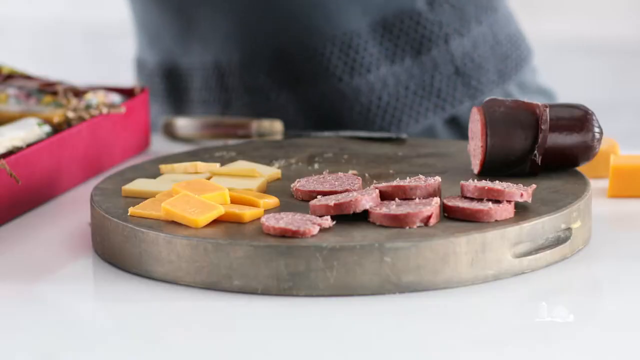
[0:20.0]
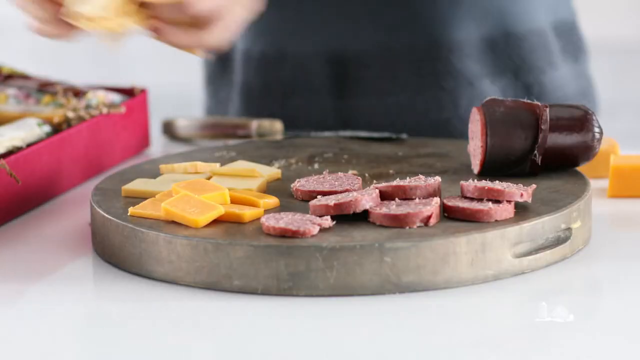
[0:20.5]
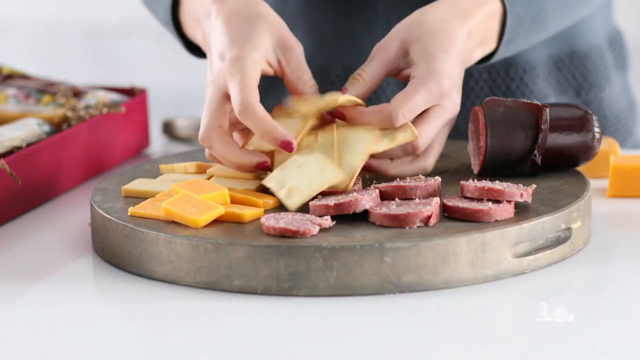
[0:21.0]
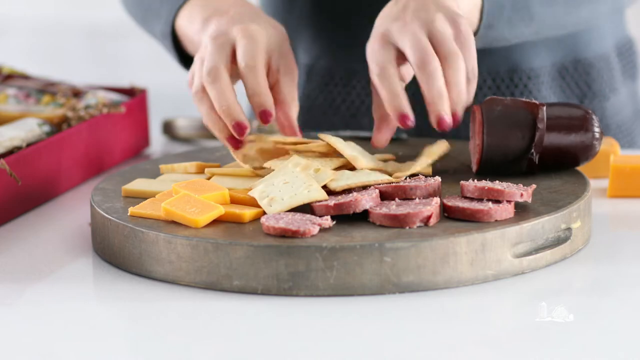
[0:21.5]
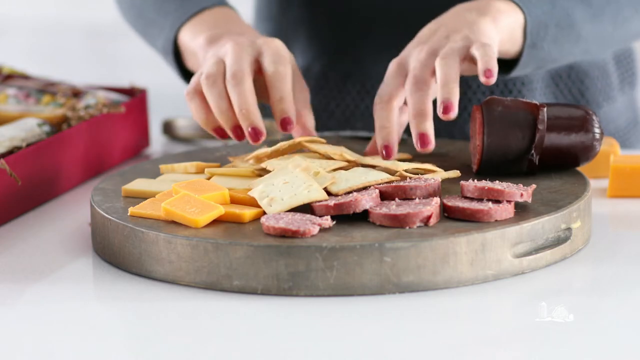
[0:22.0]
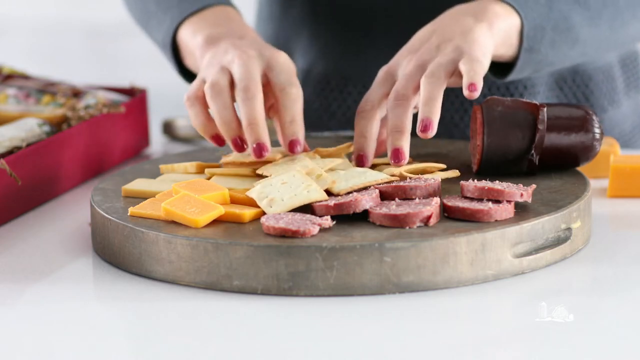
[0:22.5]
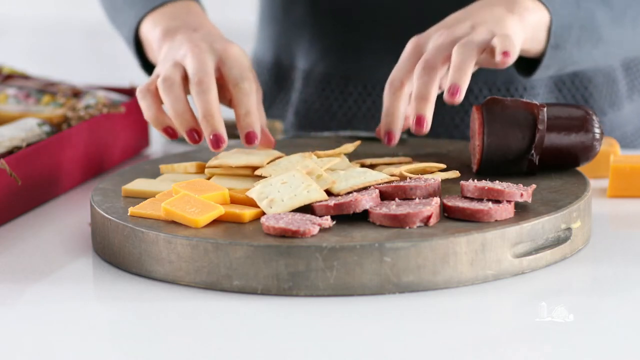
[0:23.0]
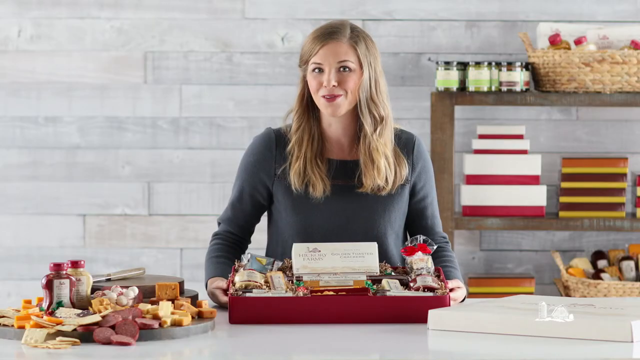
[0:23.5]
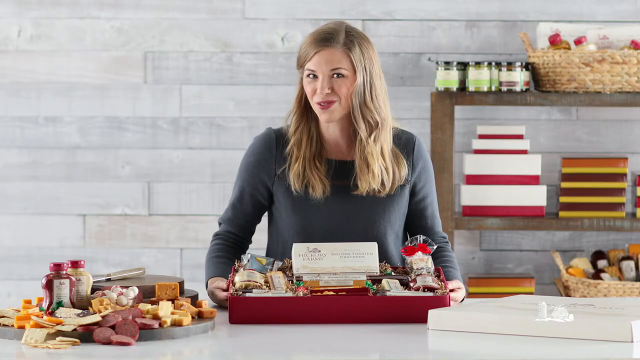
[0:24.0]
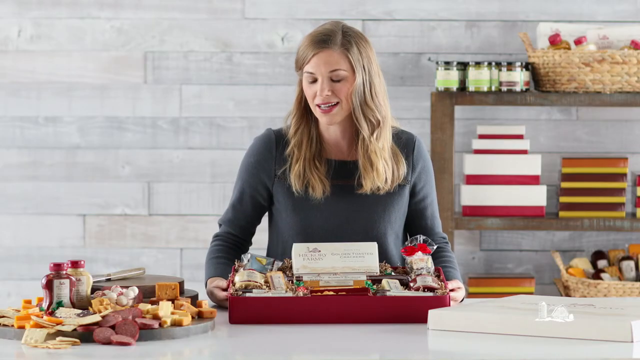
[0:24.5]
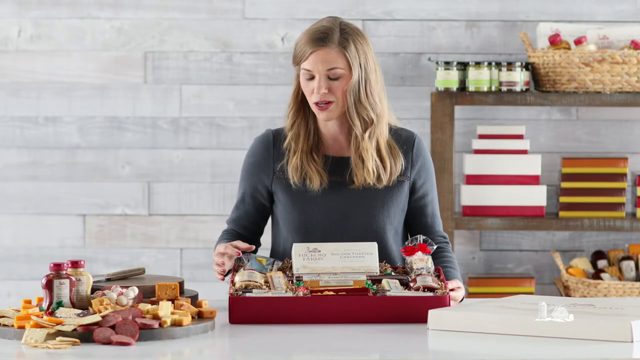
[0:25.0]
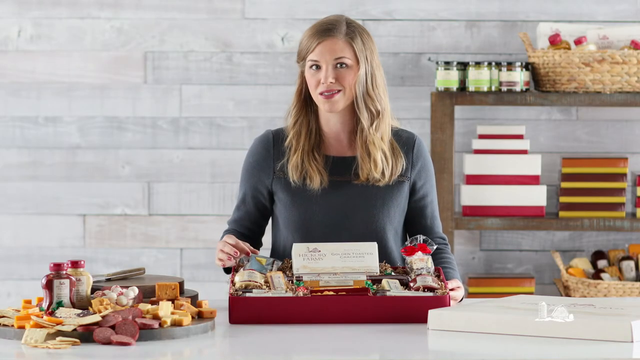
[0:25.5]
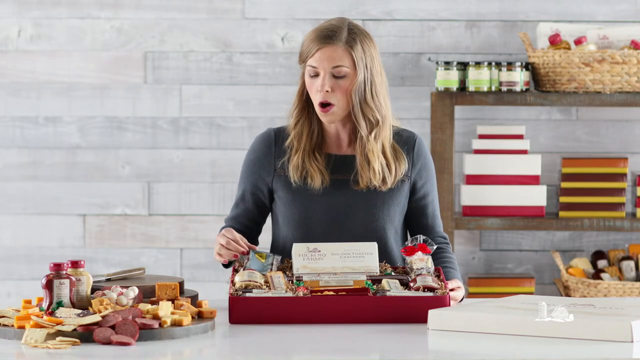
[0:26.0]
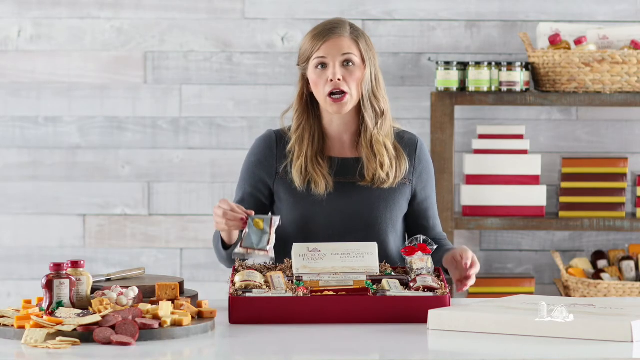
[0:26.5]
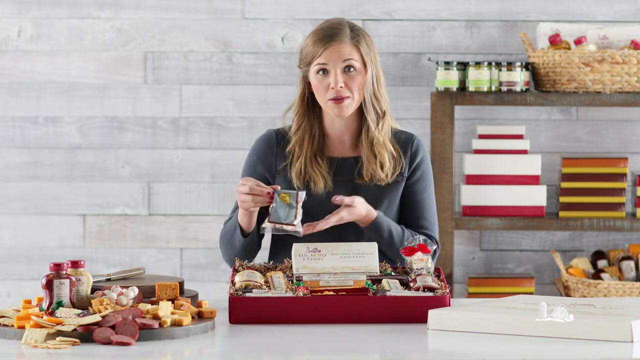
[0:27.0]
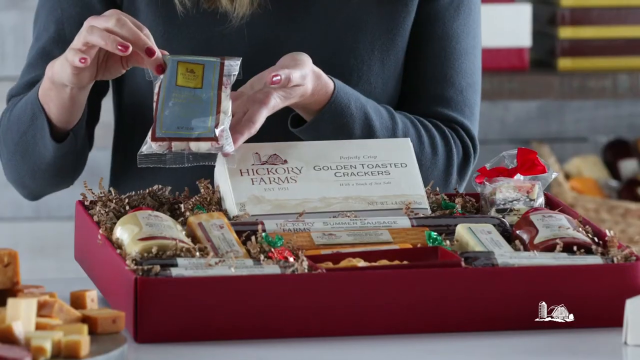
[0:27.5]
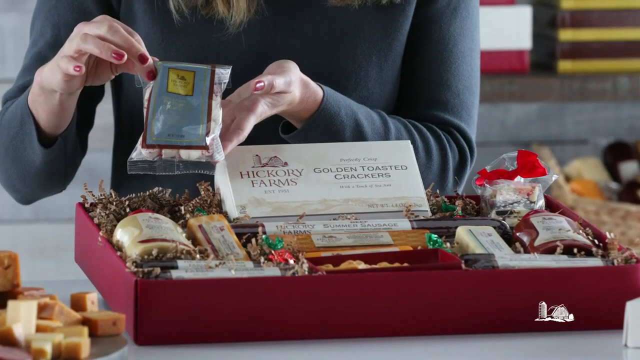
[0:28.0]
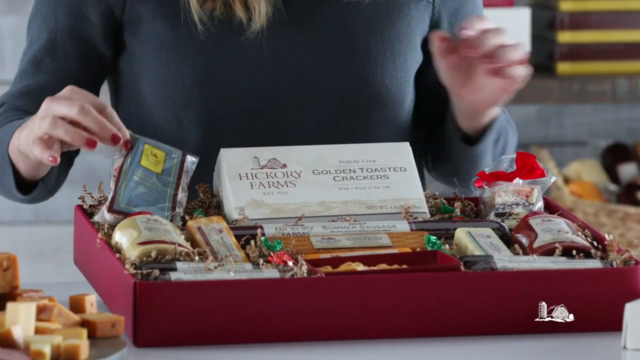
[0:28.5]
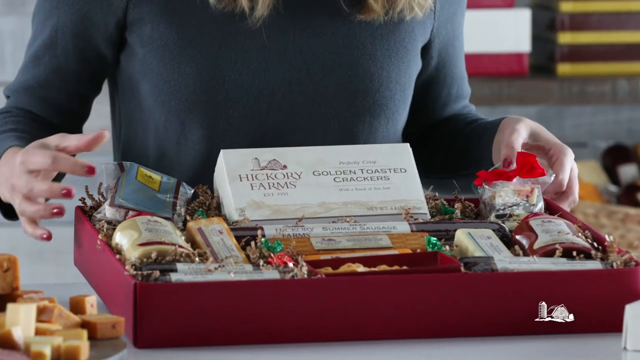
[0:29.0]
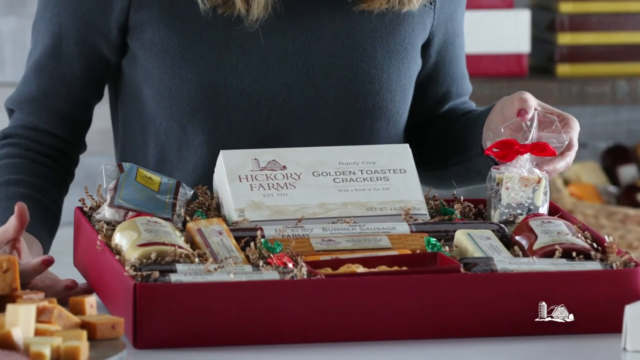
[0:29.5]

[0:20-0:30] Sliced sausages are visible, along with other products the woman has brought together, including biscuits and other items combined for the gift bowl or gift basket. She shows the presents she has in there. She is in the kitchen with a chopping board holding slices of sausage, and she puts in some mixes and some spices for the gift box.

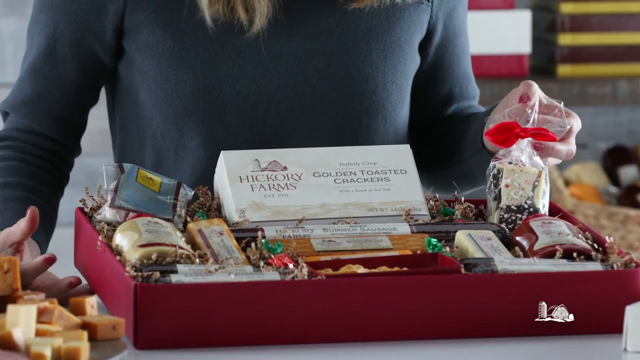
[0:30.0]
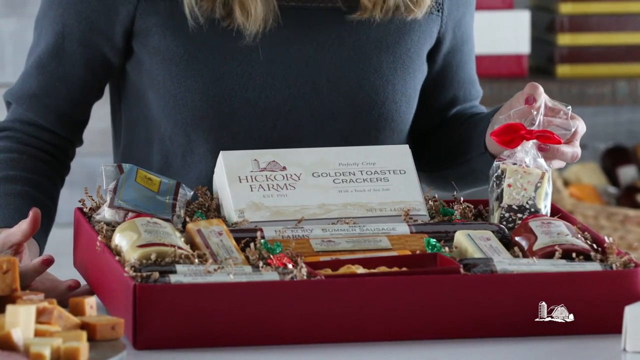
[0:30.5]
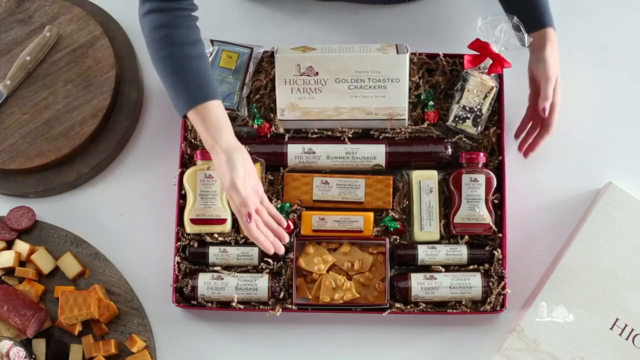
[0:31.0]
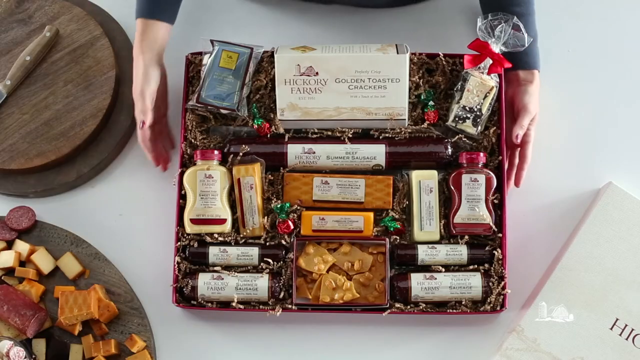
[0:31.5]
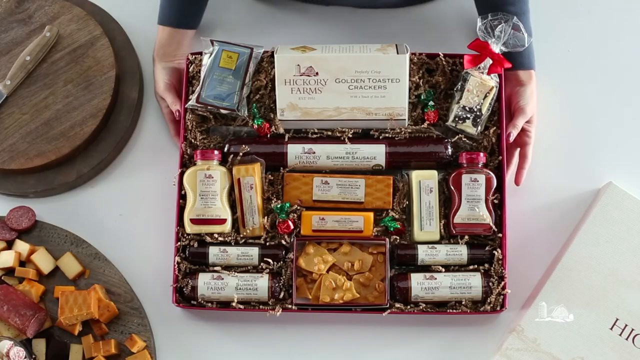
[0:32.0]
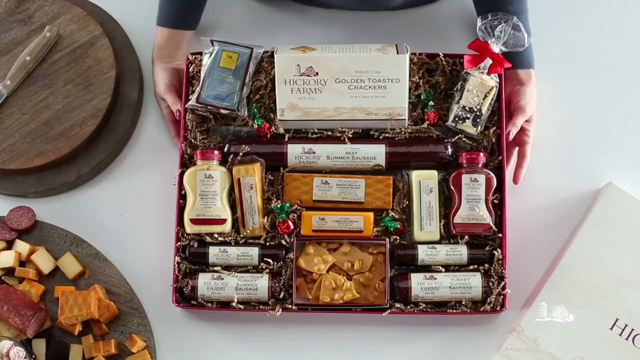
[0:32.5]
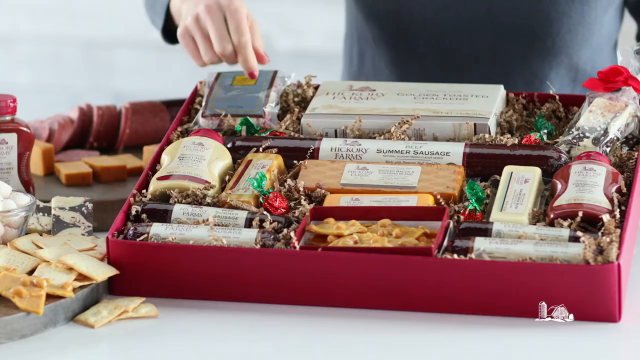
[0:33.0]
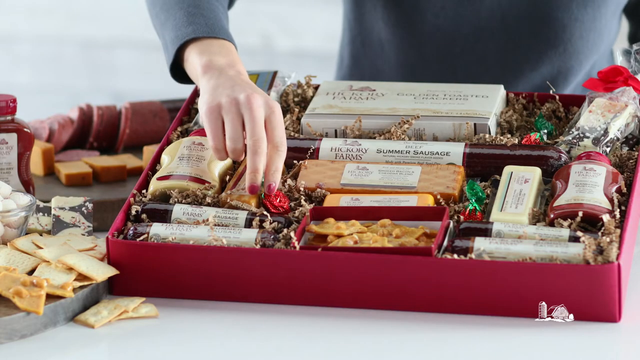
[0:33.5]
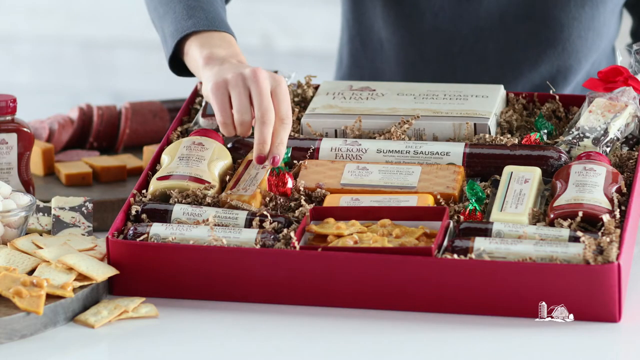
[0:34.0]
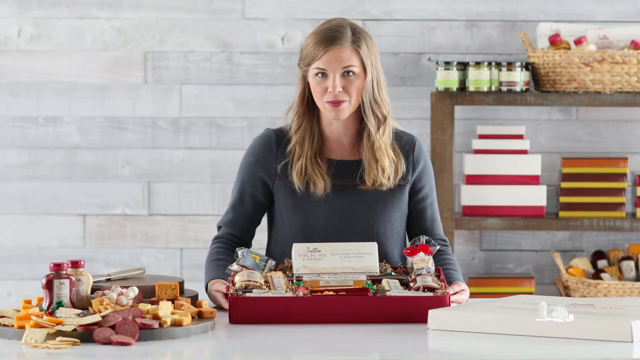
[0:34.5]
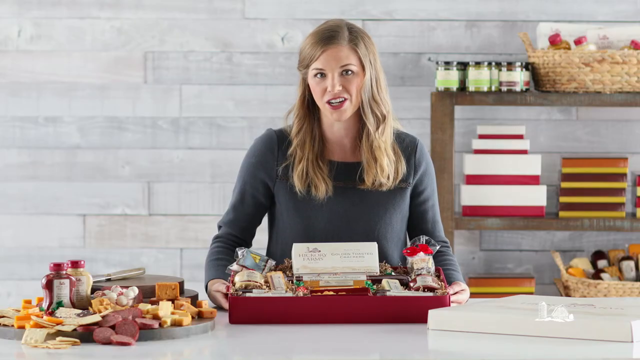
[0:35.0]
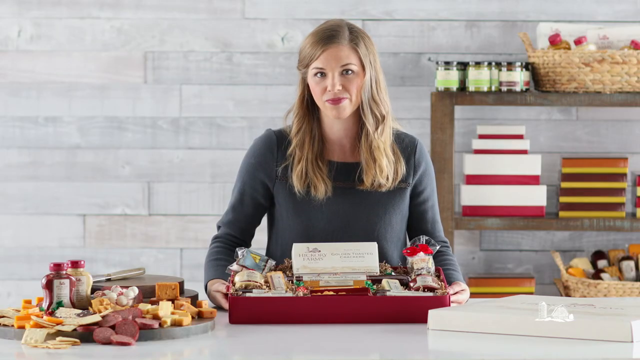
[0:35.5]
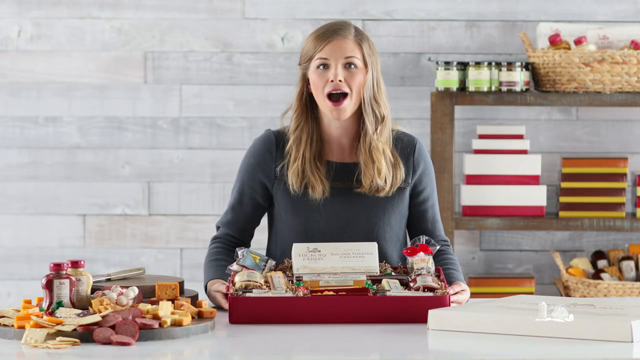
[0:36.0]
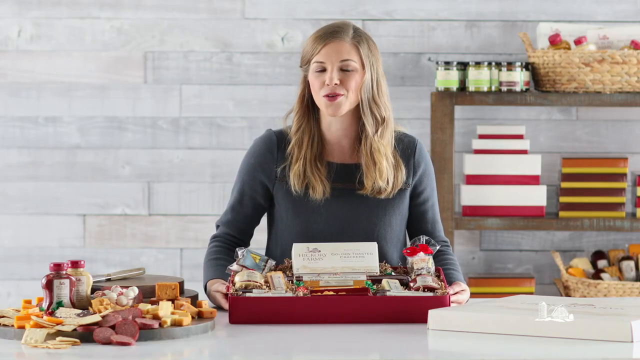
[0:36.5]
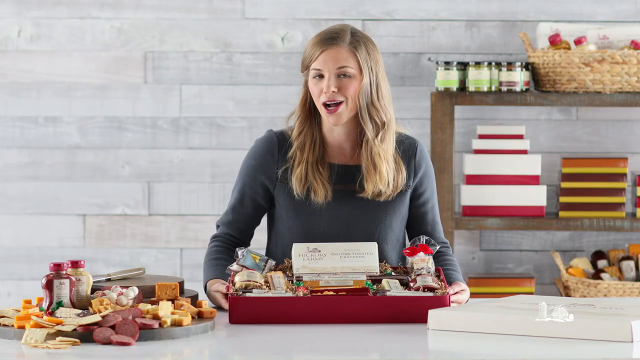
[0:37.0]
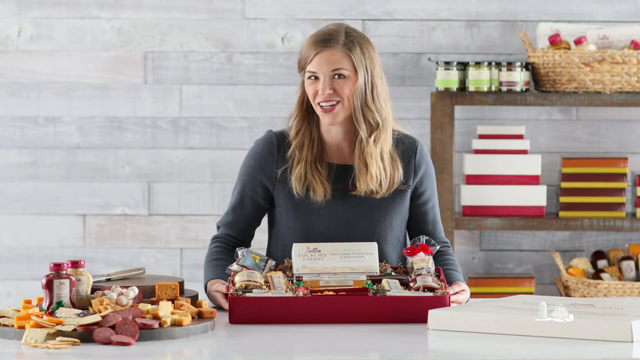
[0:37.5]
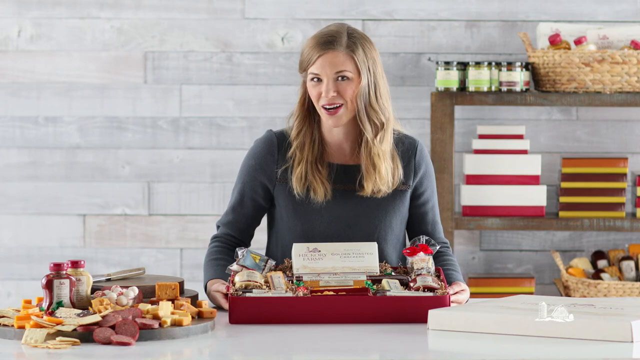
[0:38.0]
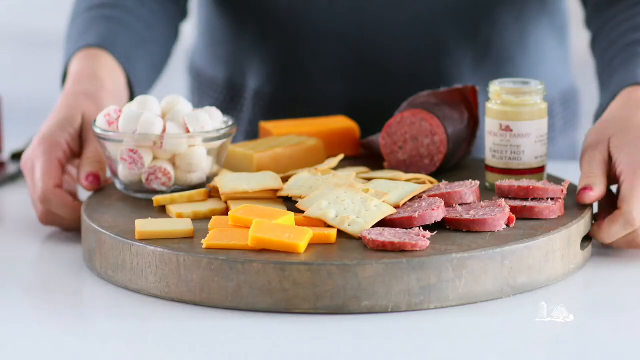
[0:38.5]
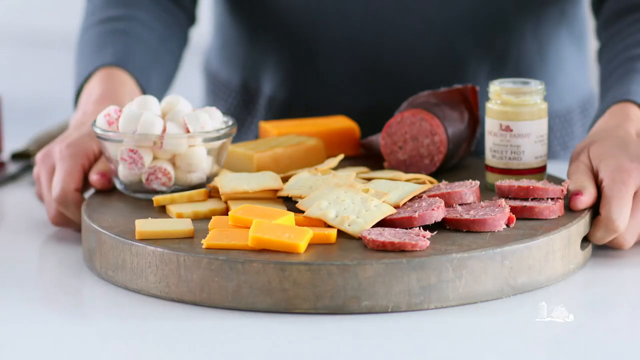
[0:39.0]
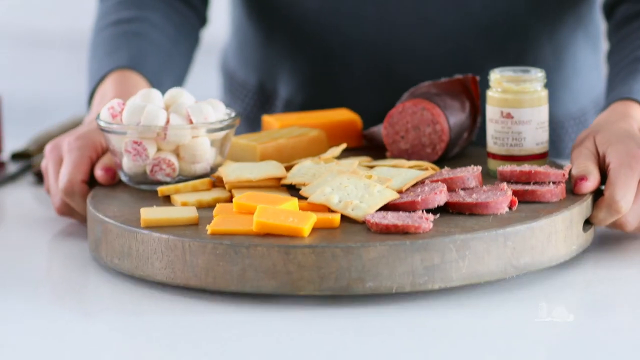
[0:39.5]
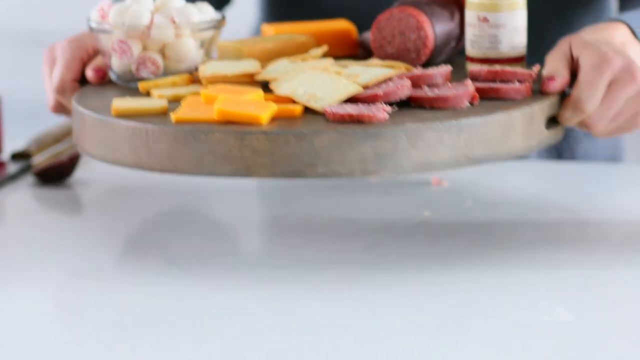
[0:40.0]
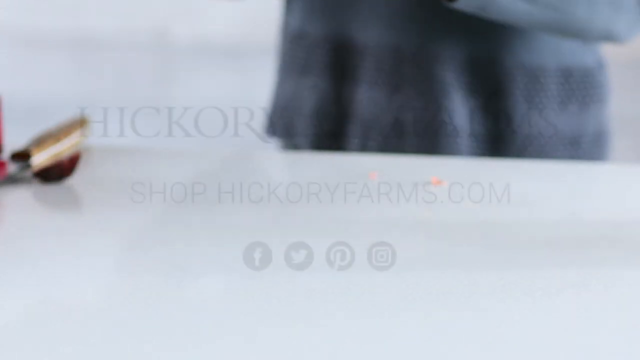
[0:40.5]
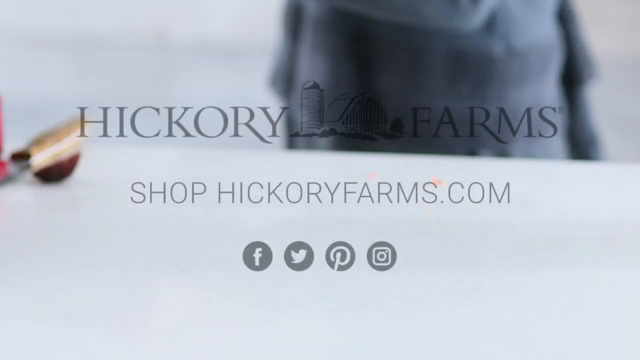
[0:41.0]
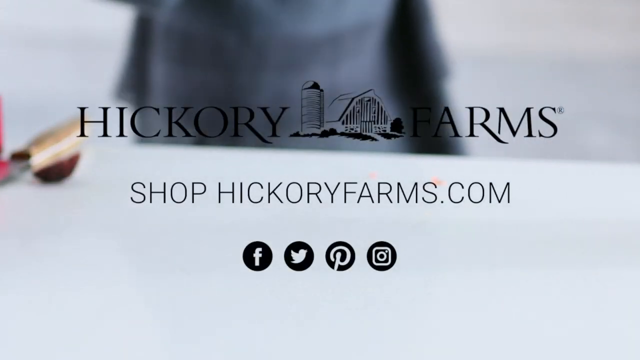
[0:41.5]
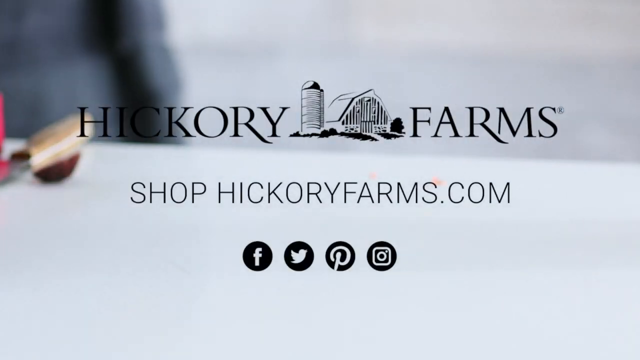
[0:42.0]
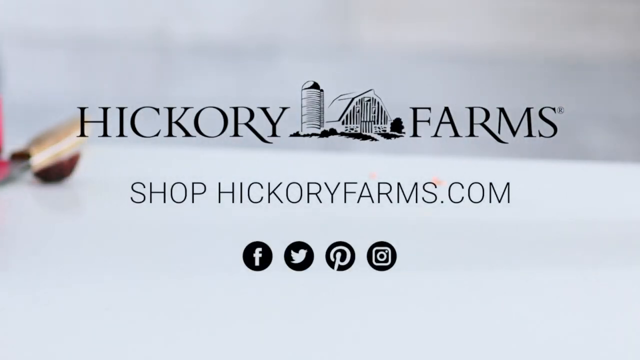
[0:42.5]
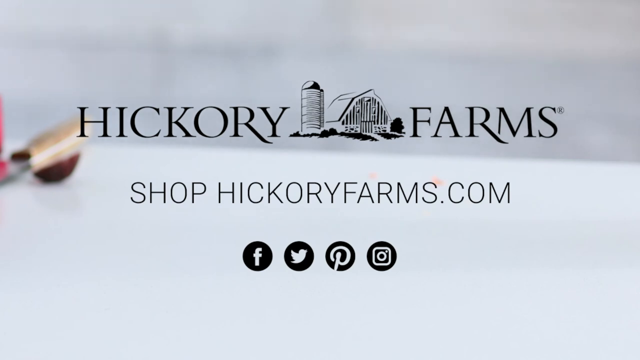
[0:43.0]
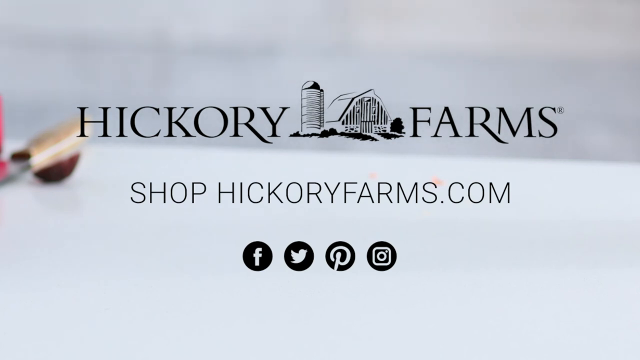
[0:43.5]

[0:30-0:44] The lady shows a full collection of what she has in store. The farm's name is Hickory Farms, and the video directs viewers to shop at hickoryfarms.com; it is an advertisement for Hickory Farms.